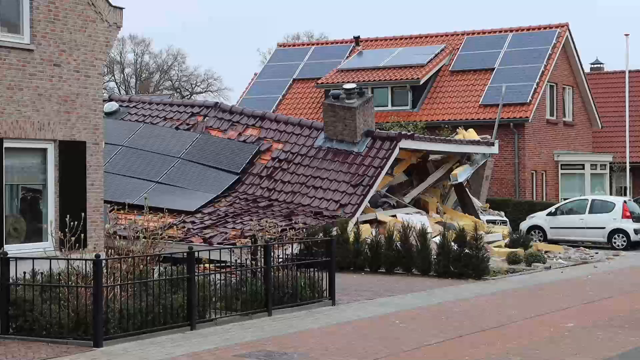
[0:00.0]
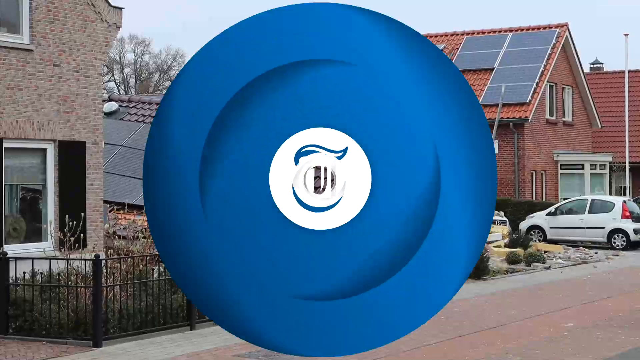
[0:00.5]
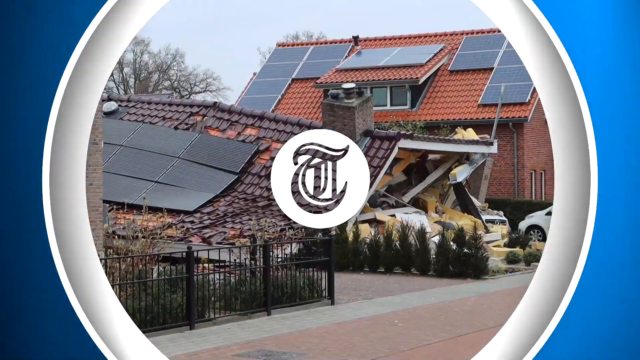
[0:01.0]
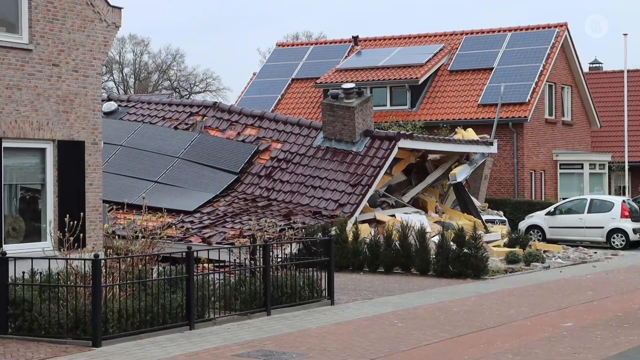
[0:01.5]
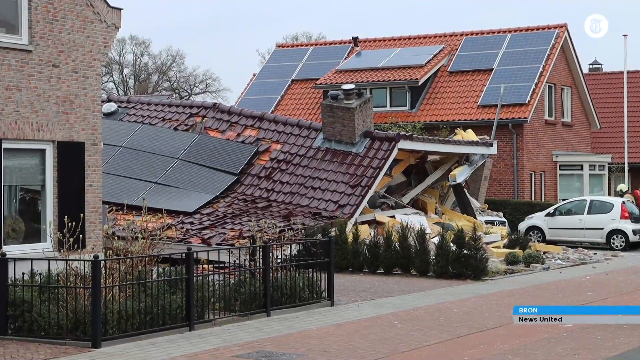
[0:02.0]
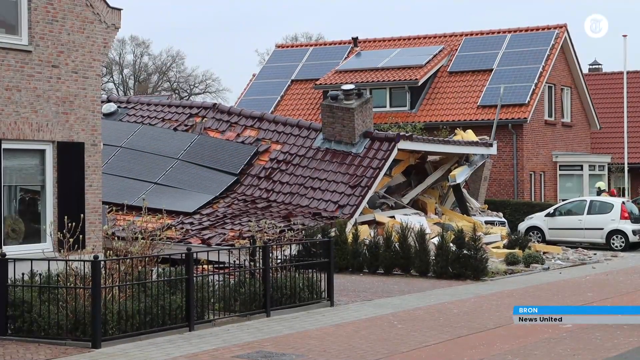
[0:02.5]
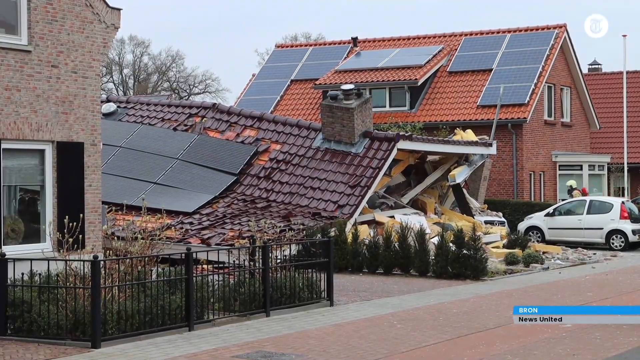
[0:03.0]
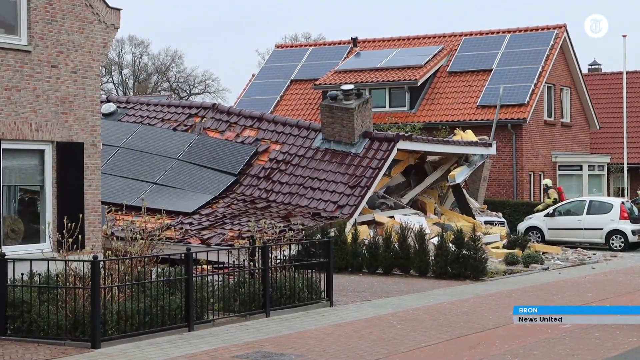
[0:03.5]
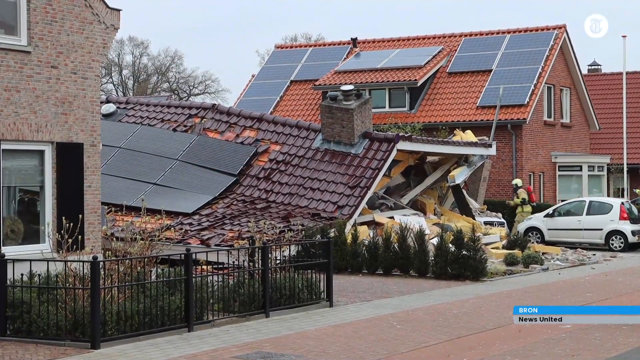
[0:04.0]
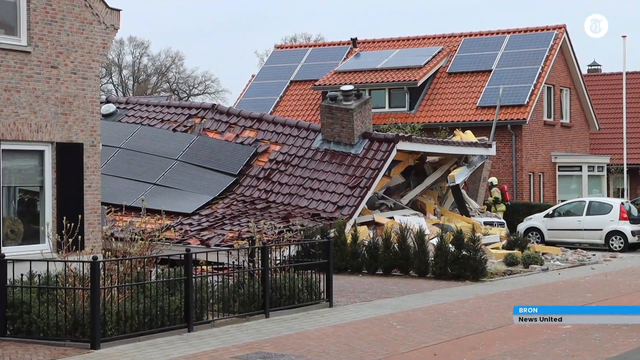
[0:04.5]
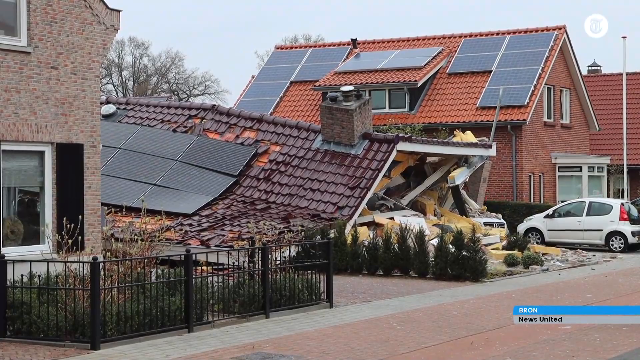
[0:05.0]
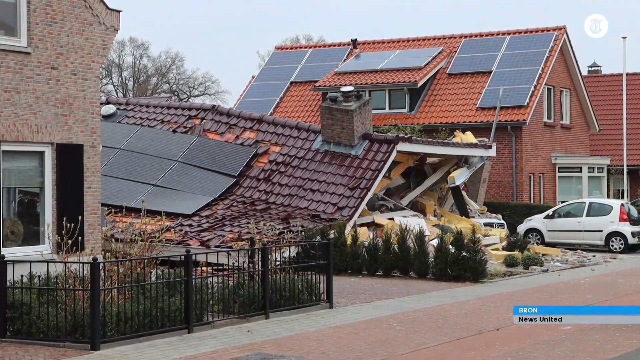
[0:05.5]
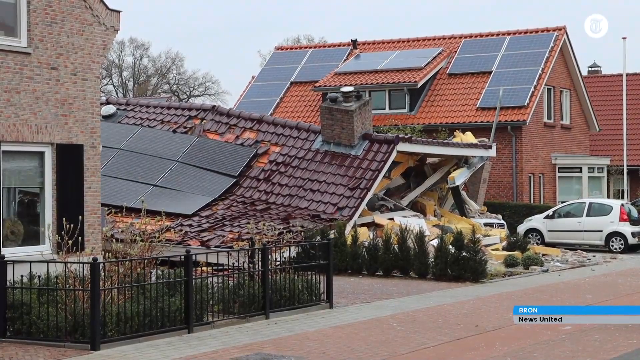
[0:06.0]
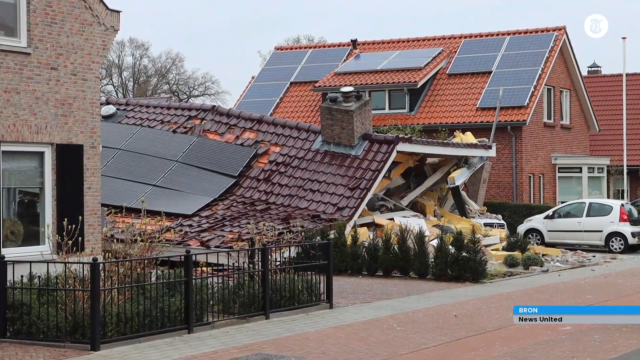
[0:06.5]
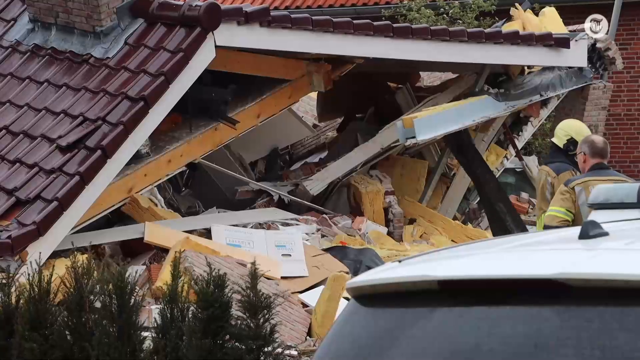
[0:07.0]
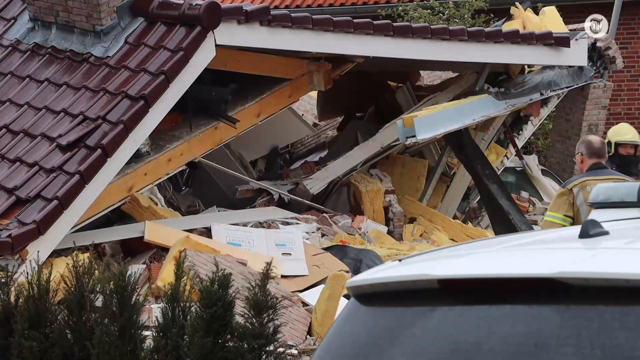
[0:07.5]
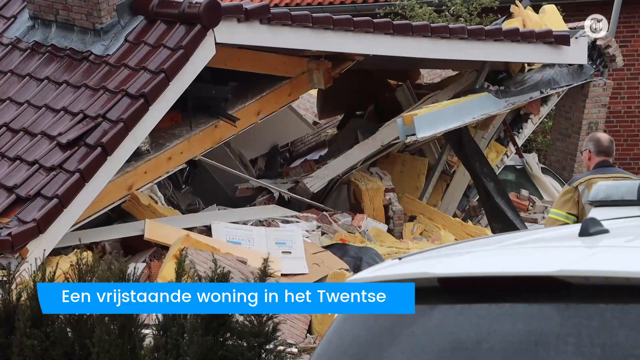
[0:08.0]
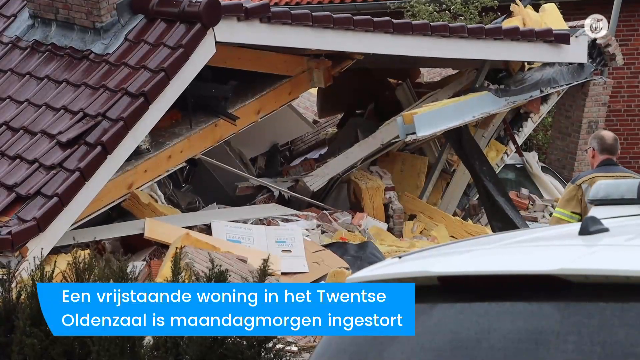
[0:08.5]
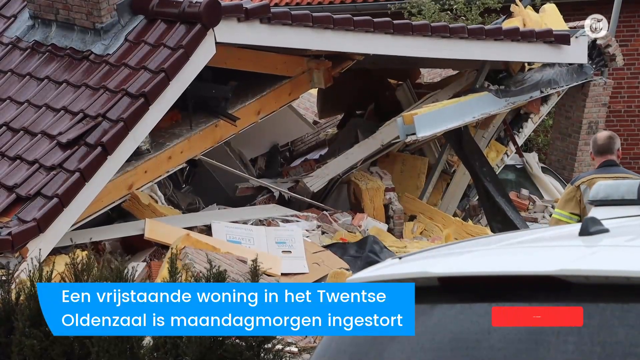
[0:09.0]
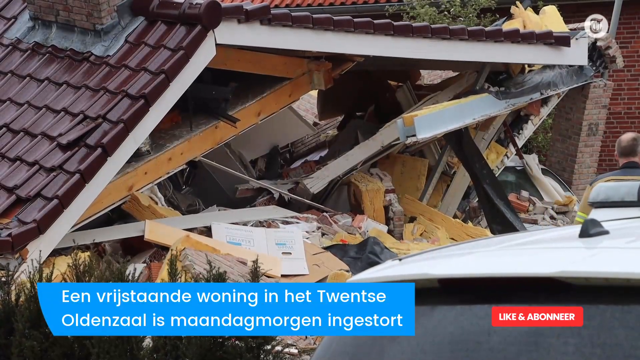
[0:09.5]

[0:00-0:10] The video seems to be a news report about a house that seems to be demolished. A small neighborhood street is lined with what looks like mostly brick houses. On one house, the foundation and walls are pretty much completely destroyed, so the roof kind of looks like it is almost sitting on the ground, with piles of broken debris underneath it. What look like some emergency professionals are on the scene going into the house, maybe to search for injured people or to clear the area. There are solar panels on the demolished house and on nearby houses as well. A pop-up of text in a foreign language appears at the bottom of the screen.